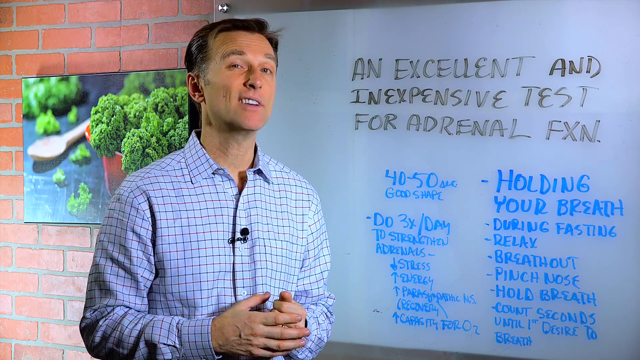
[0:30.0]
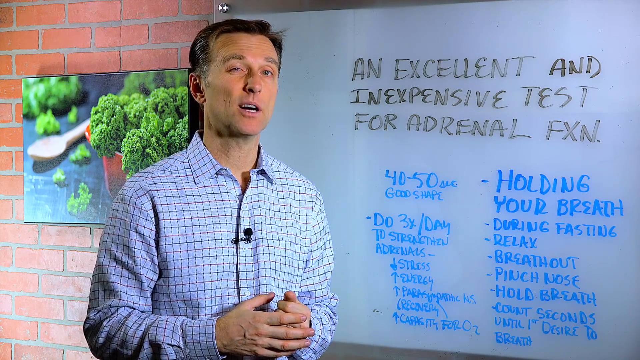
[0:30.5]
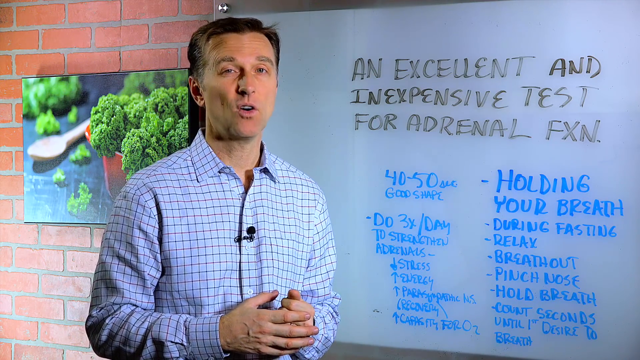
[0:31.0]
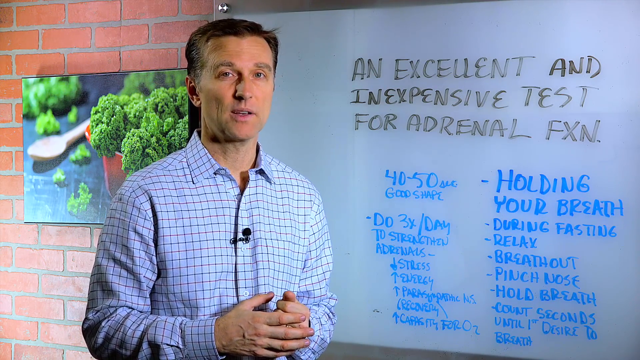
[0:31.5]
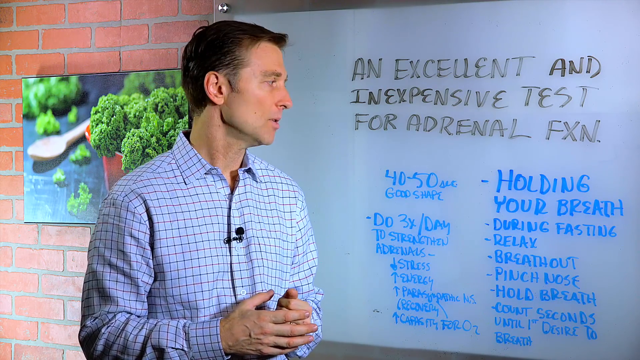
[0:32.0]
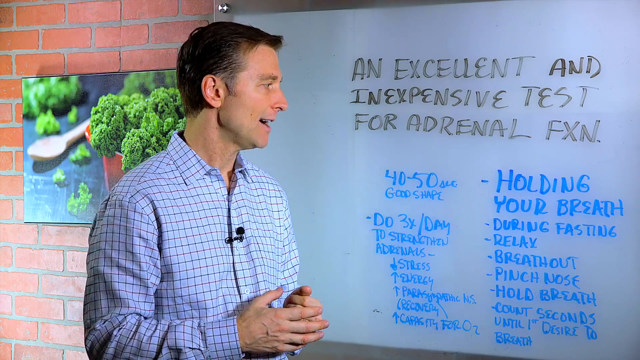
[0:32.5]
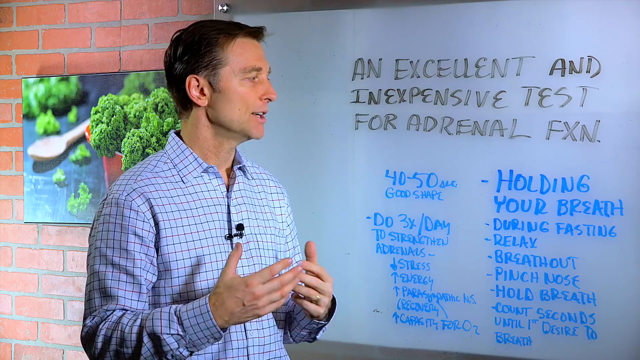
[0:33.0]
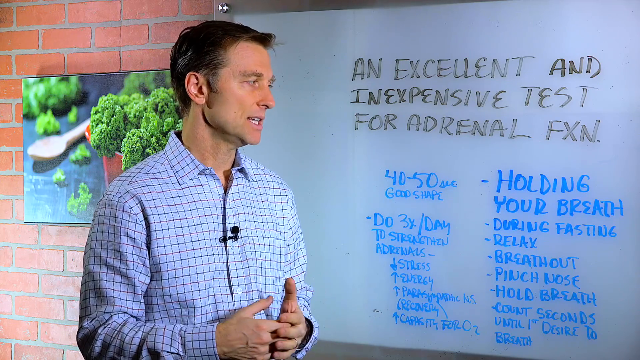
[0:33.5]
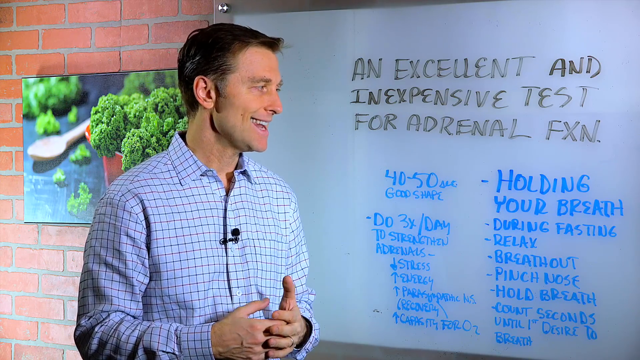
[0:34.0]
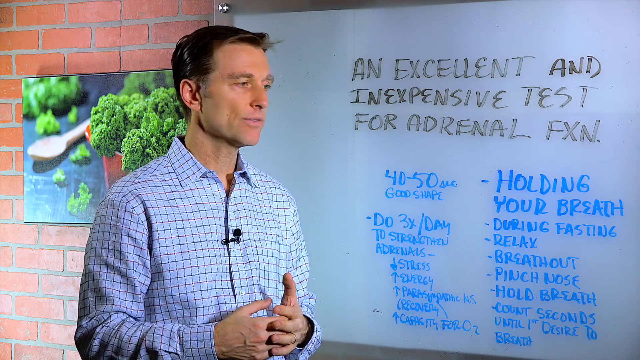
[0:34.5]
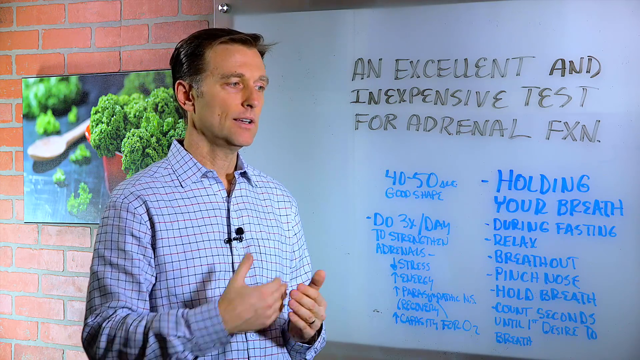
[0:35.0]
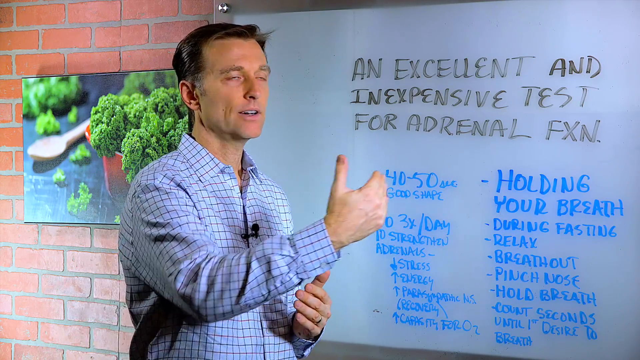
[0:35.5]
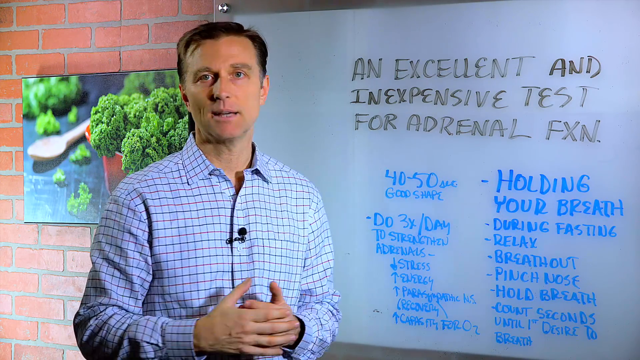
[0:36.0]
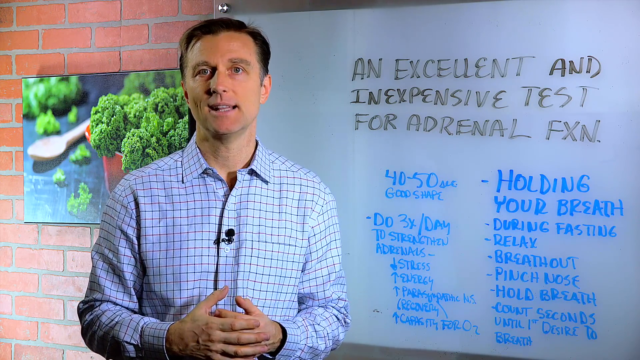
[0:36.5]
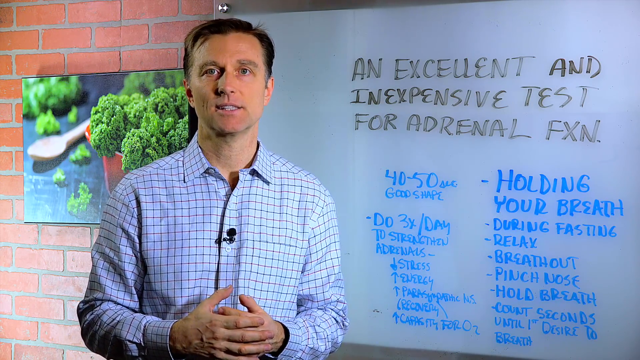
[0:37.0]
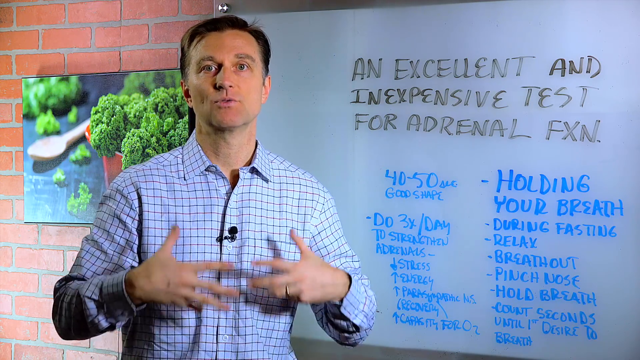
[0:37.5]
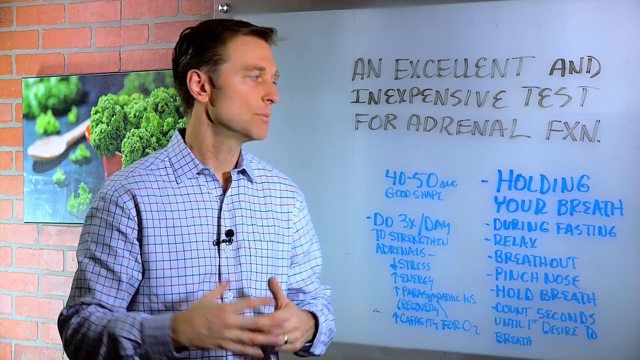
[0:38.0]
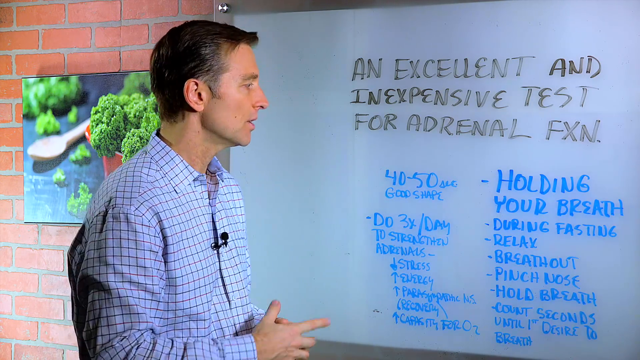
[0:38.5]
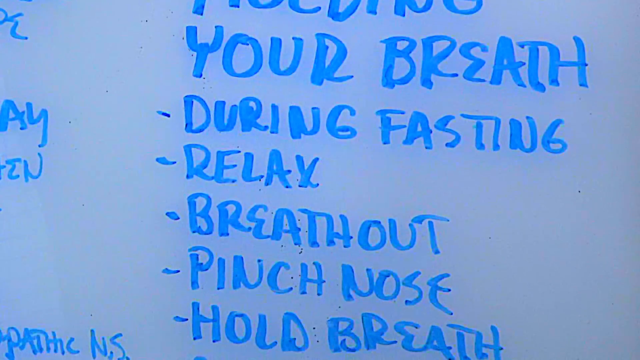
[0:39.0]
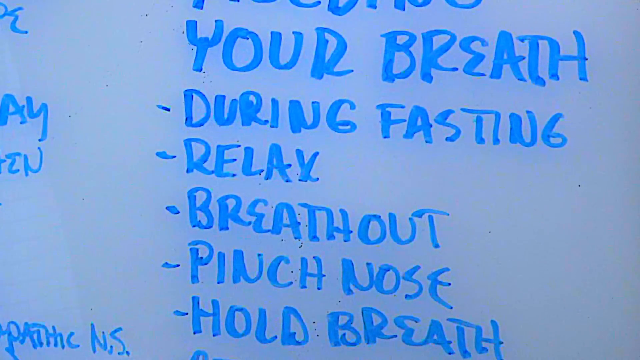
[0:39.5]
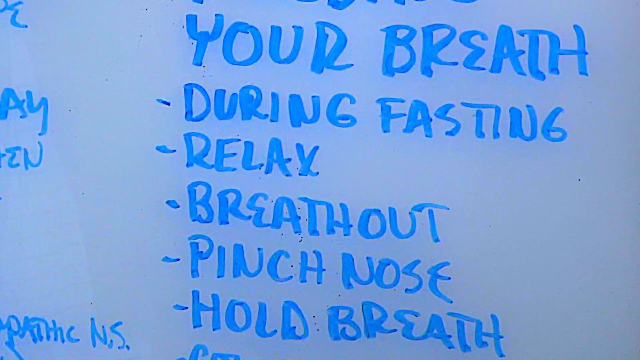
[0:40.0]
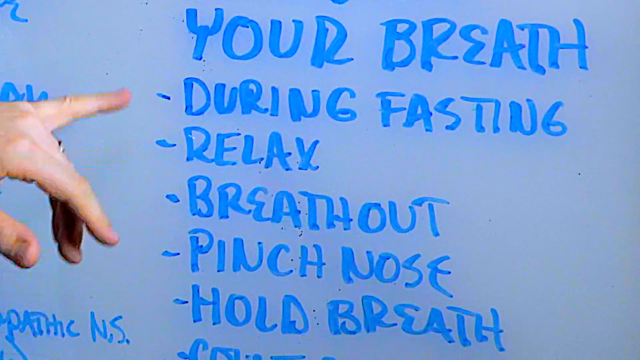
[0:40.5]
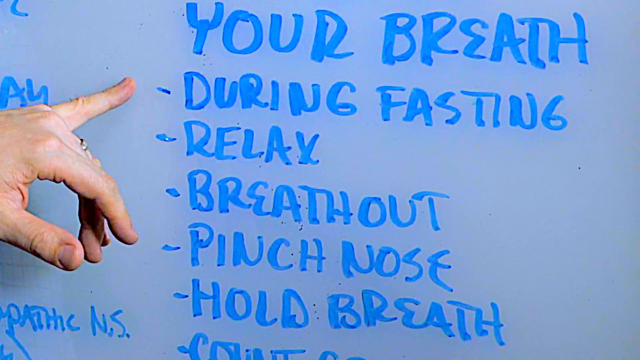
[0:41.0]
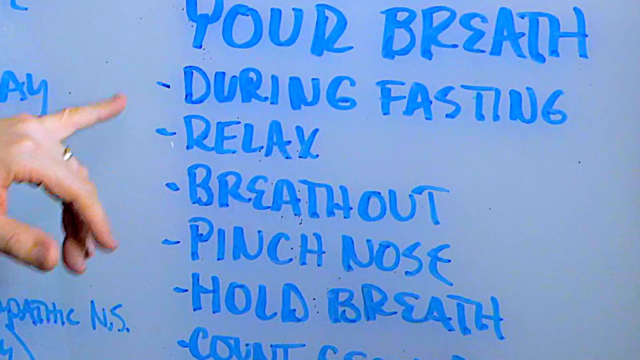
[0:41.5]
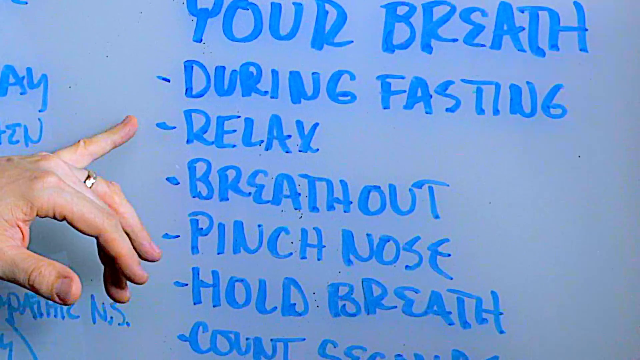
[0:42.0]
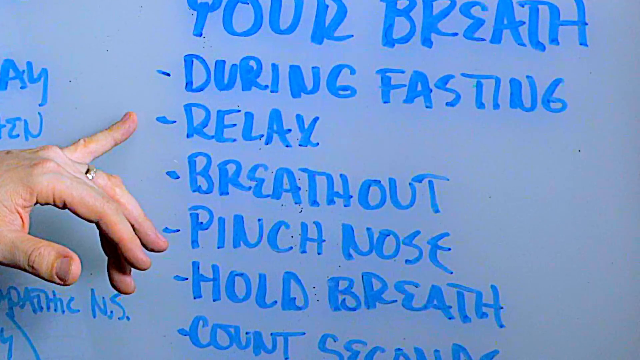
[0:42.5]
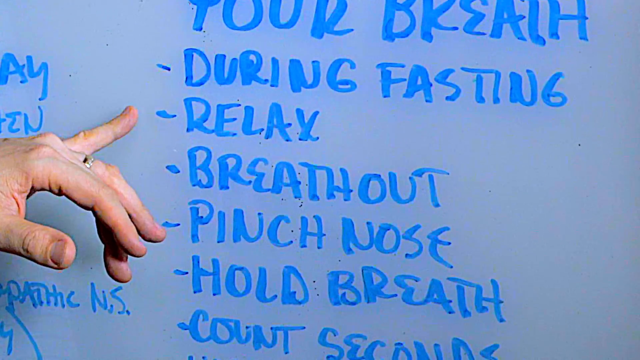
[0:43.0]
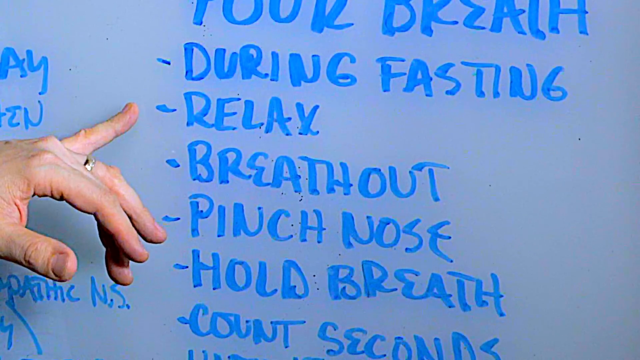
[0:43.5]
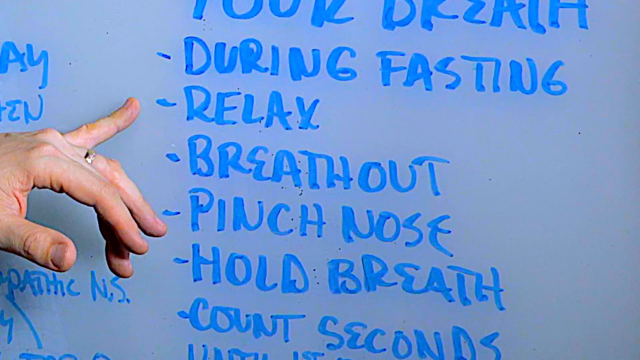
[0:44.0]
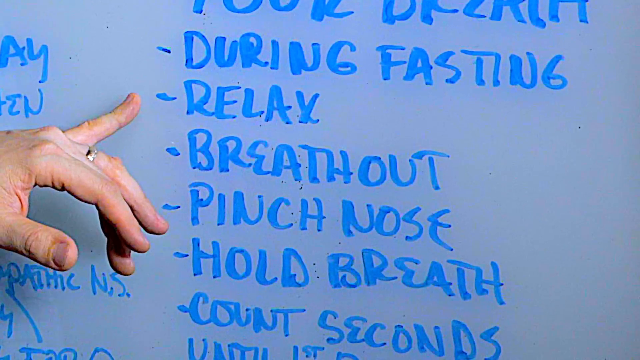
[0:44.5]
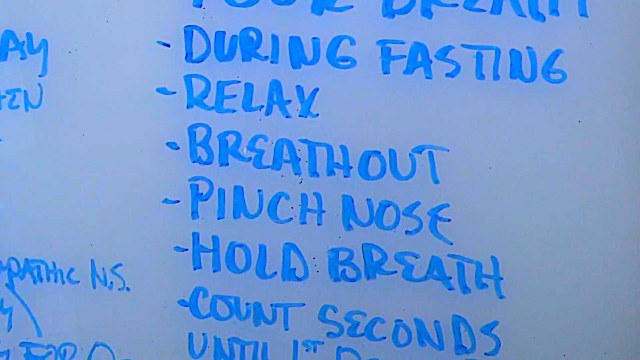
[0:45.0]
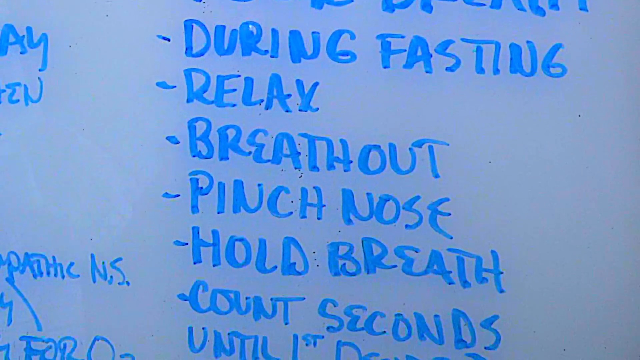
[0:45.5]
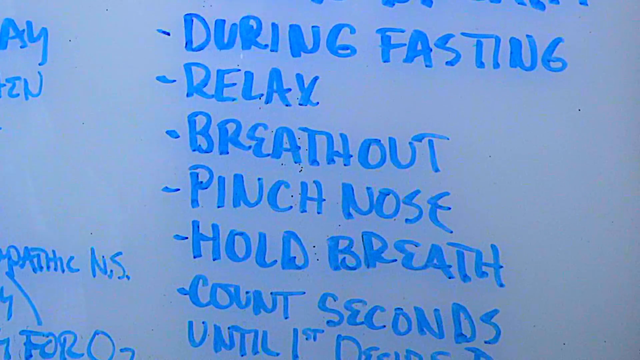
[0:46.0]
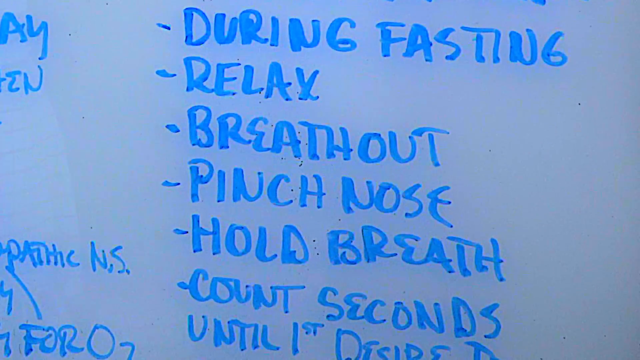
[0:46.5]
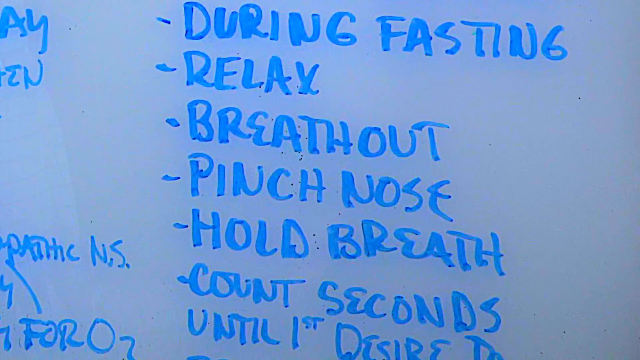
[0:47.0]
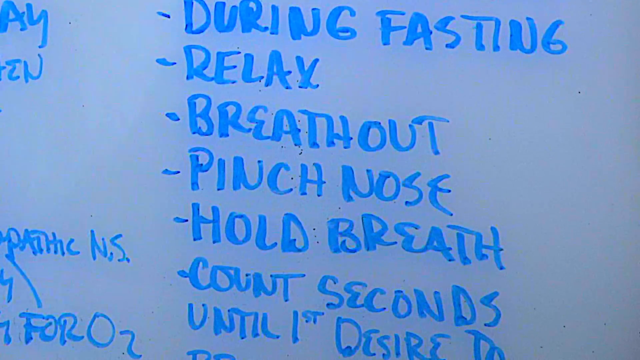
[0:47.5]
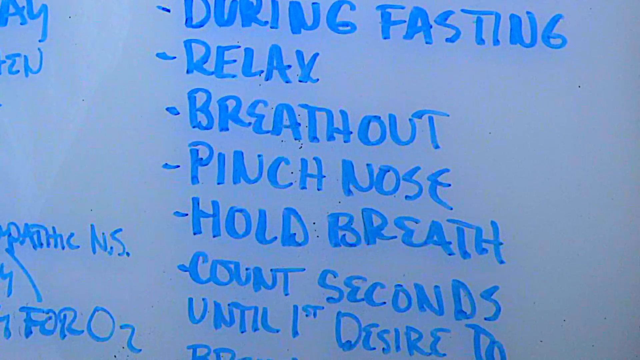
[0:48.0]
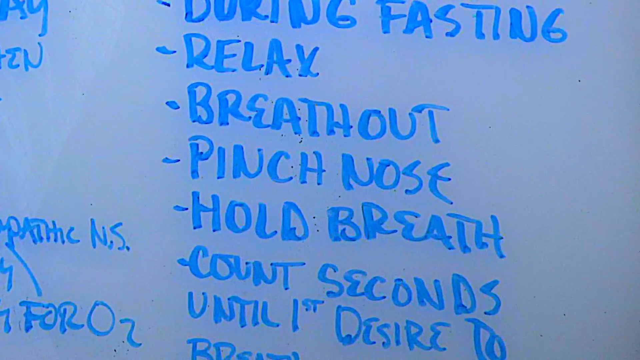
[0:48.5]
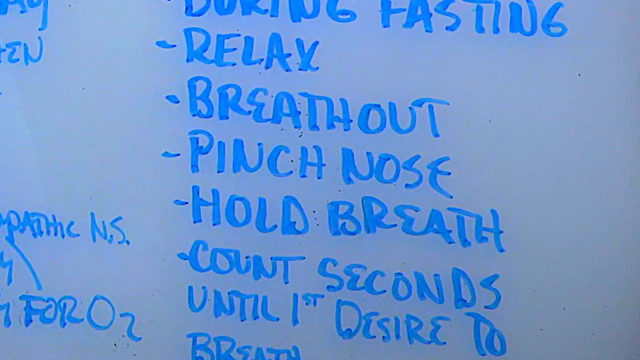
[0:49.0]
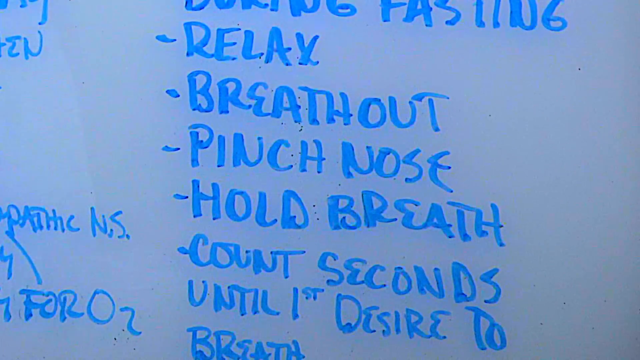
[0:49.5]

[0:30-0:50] The man stands beside the whiteboard, talking about some kind of health or medical content. Behind him is a display with some kale and a wooden spoon. The whiteboard has text in black and in blue. The camera pans for a closer view of the blue text, which reads, all in capital letters, "your breath, during fasting, relax, breathe out, pinch nose, hold breath", continuing with "count seconds until desired". The camera pans back to the man, who keeps talking and gesturing with his hands, then pans to the text again: "during fasting, relax, breathe out, pinch nose, hold breath, count seconds until satisfied".